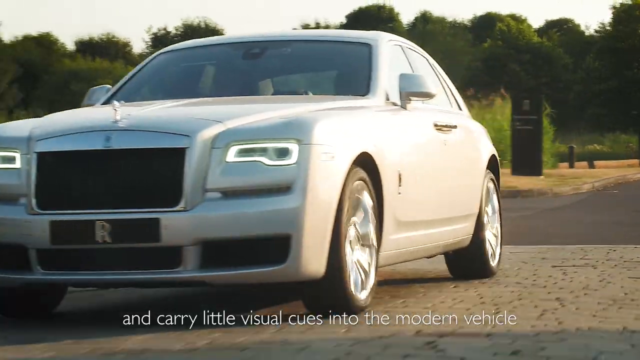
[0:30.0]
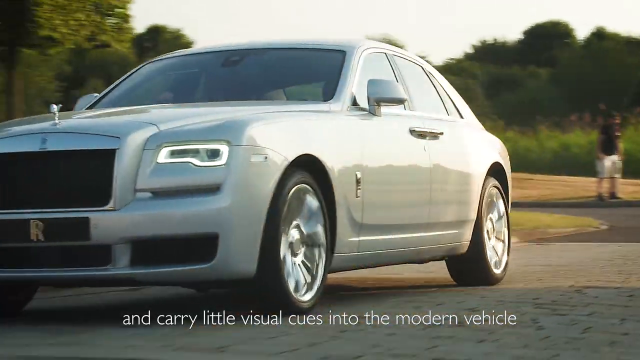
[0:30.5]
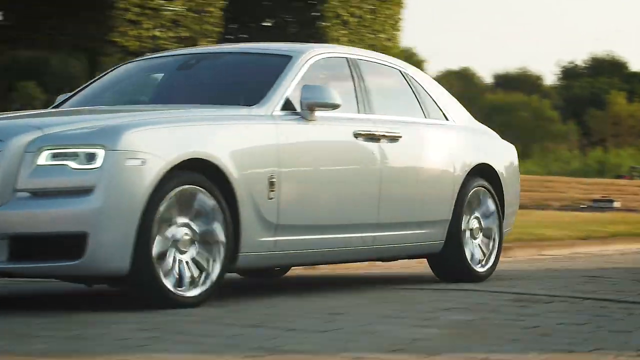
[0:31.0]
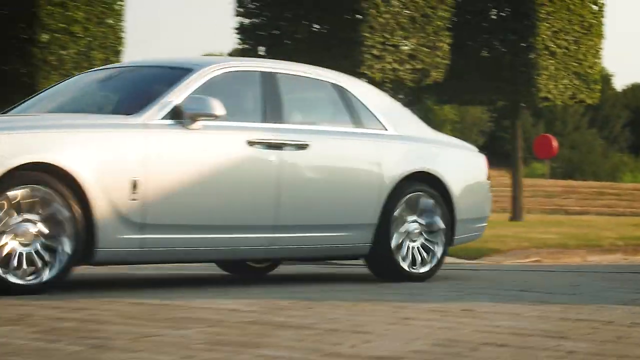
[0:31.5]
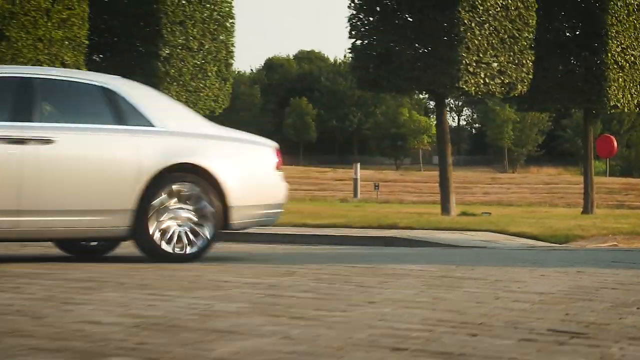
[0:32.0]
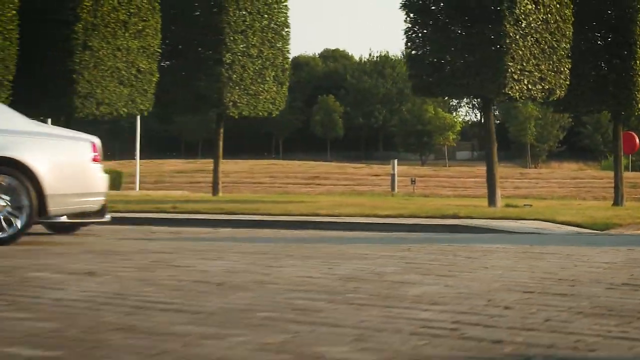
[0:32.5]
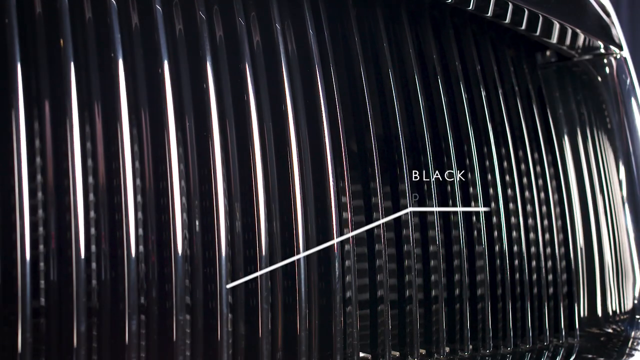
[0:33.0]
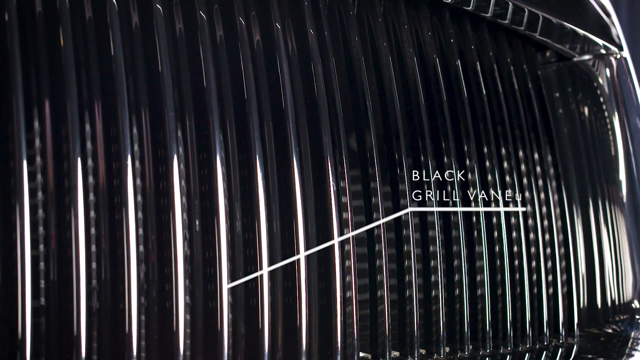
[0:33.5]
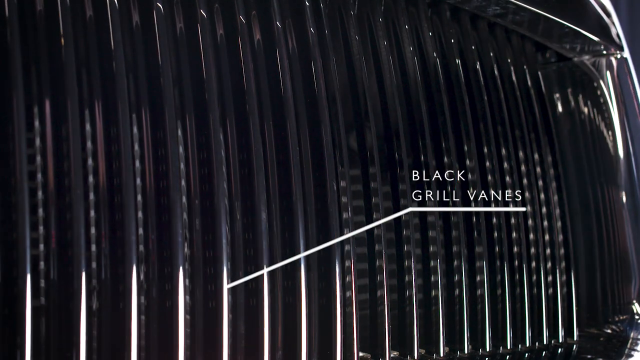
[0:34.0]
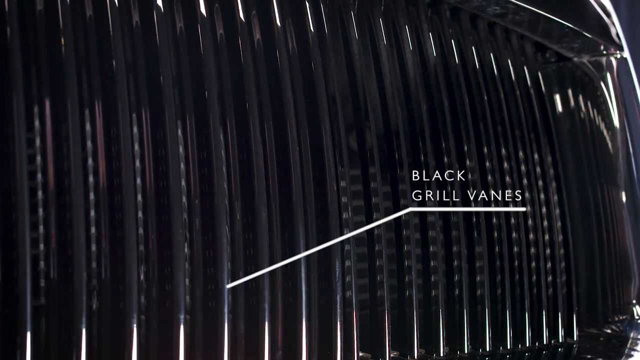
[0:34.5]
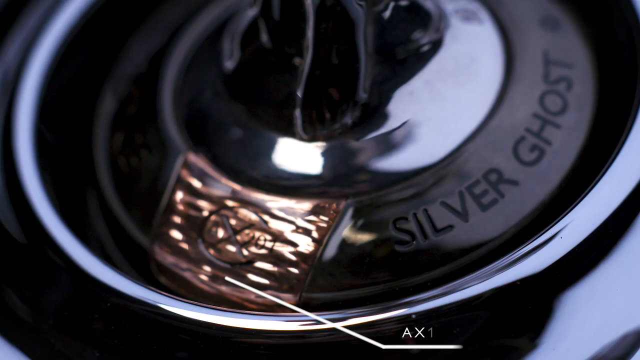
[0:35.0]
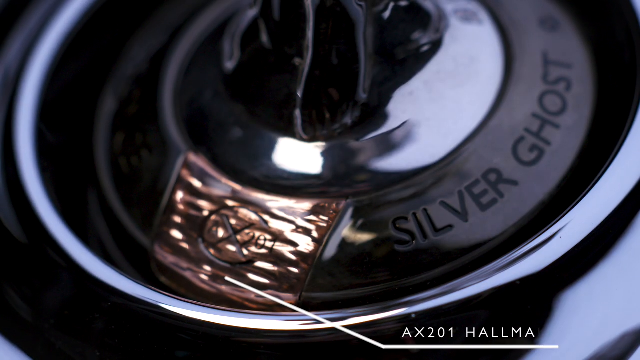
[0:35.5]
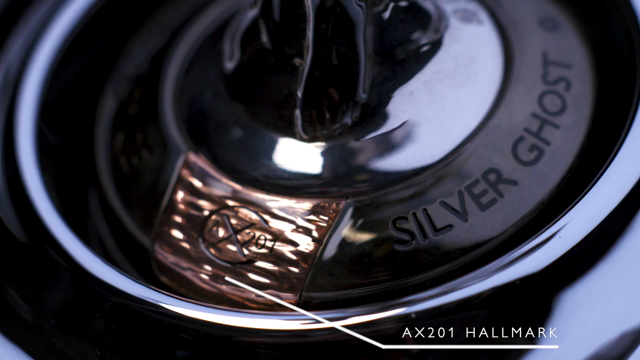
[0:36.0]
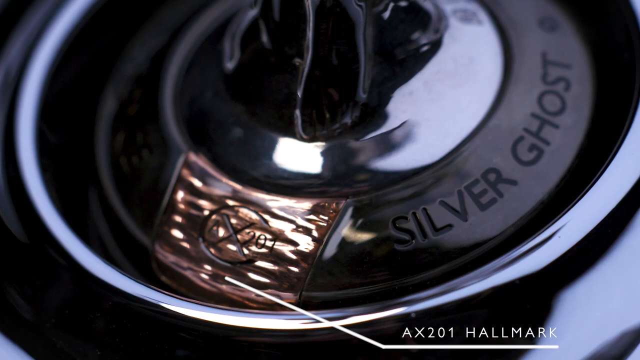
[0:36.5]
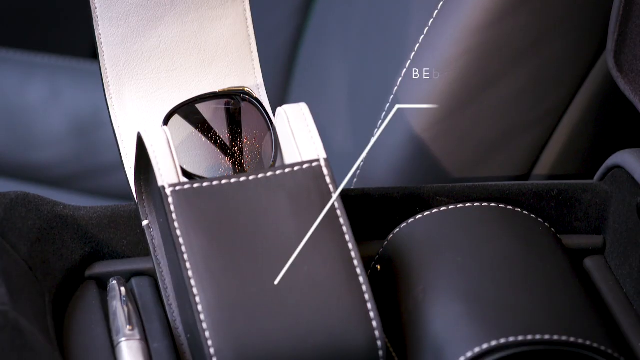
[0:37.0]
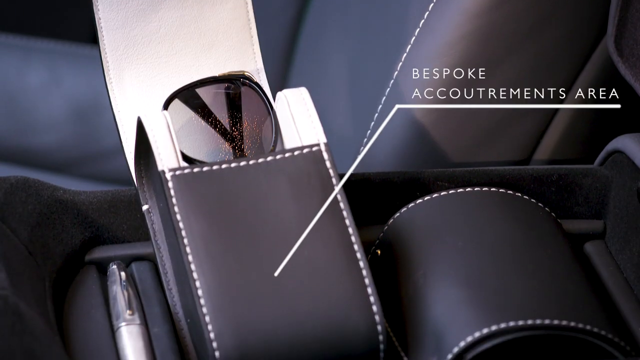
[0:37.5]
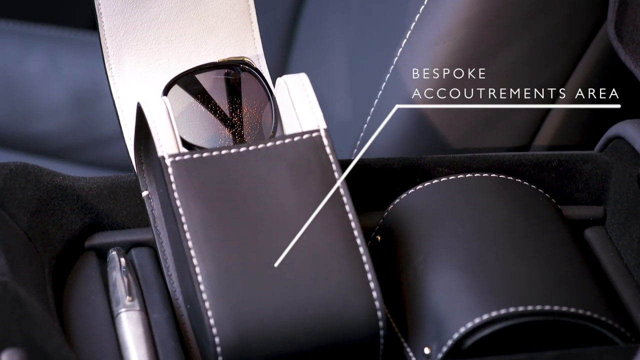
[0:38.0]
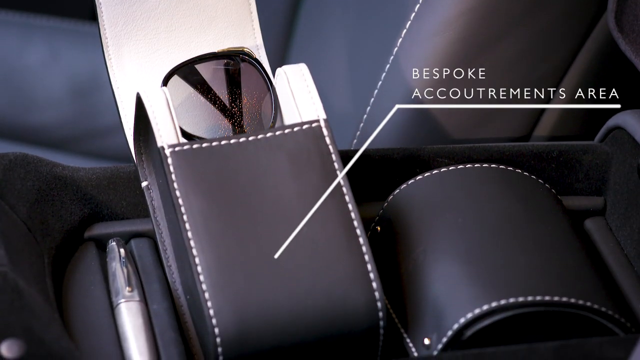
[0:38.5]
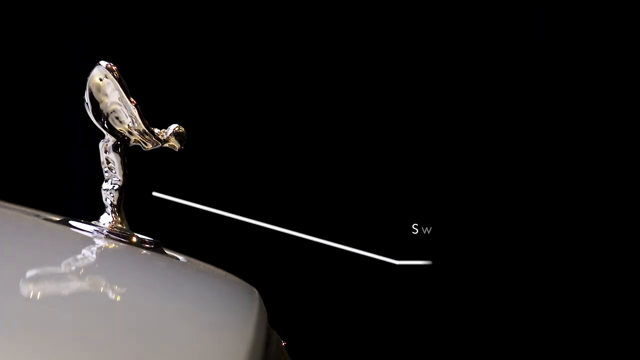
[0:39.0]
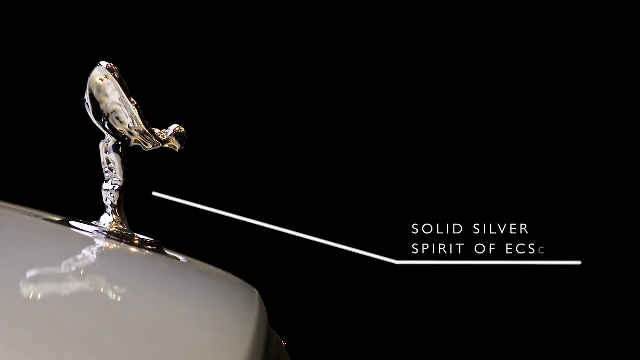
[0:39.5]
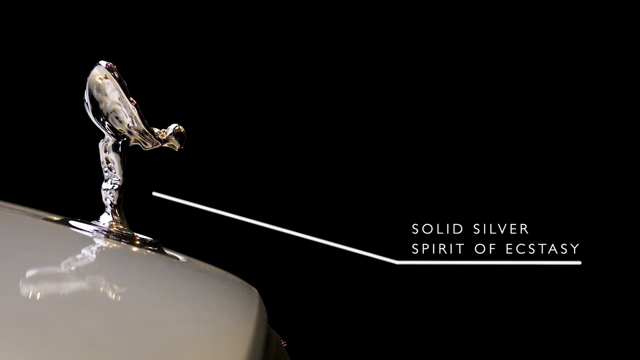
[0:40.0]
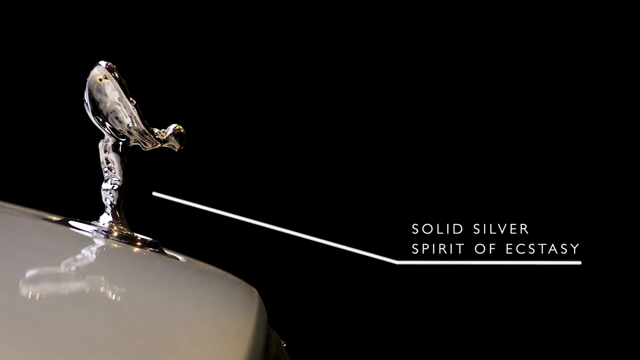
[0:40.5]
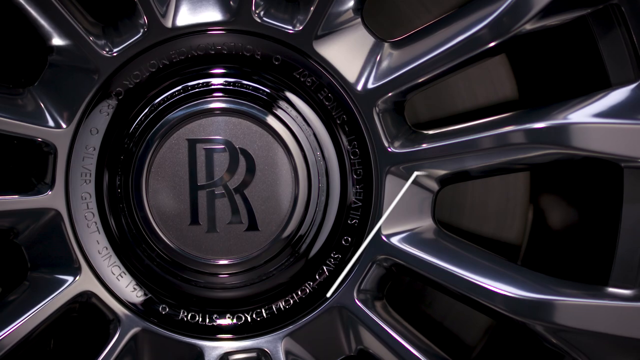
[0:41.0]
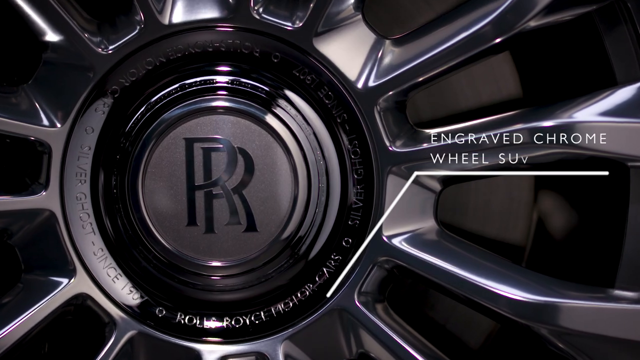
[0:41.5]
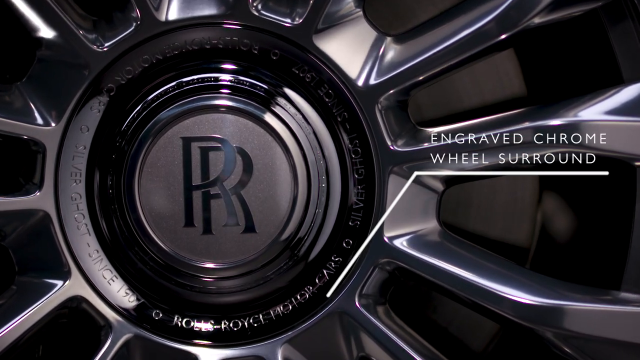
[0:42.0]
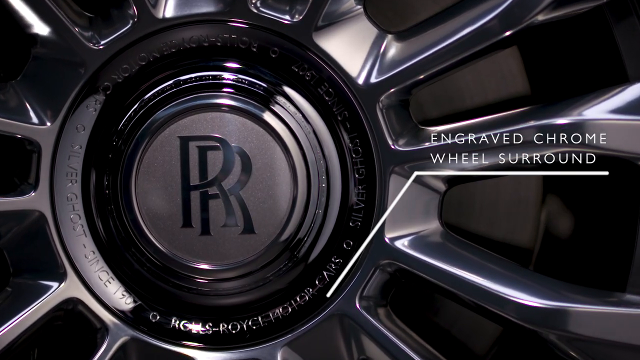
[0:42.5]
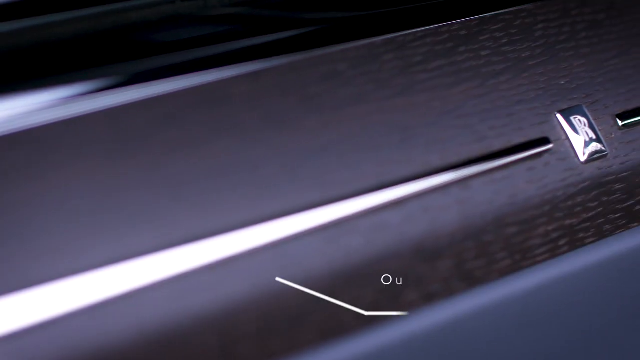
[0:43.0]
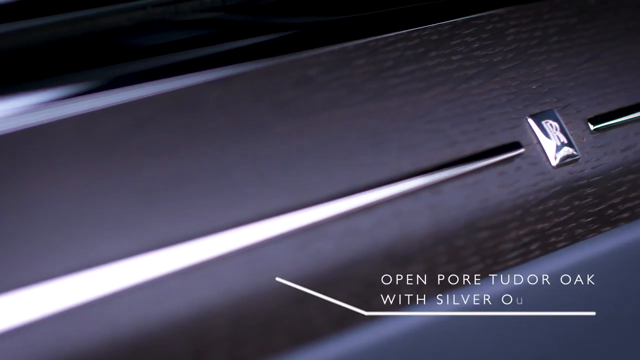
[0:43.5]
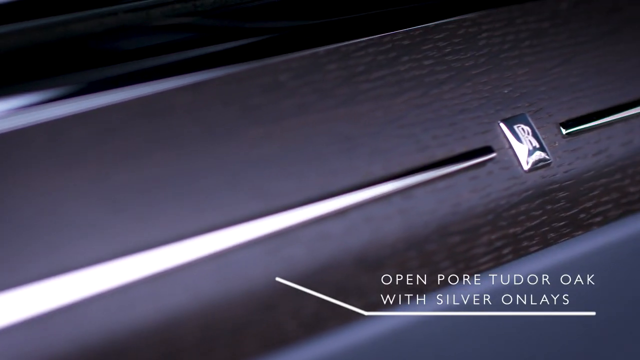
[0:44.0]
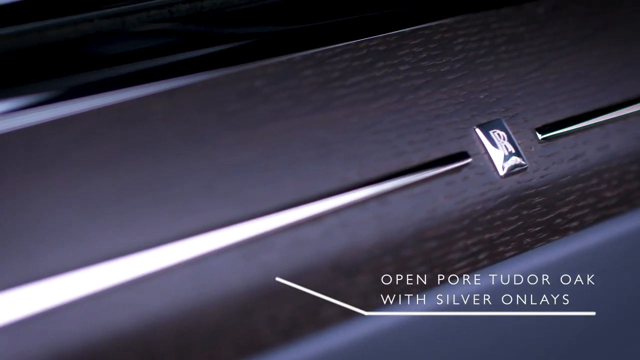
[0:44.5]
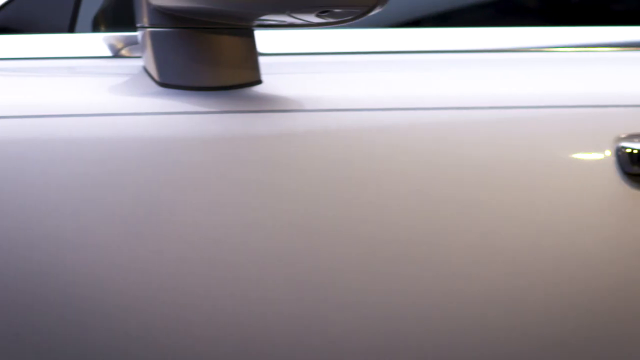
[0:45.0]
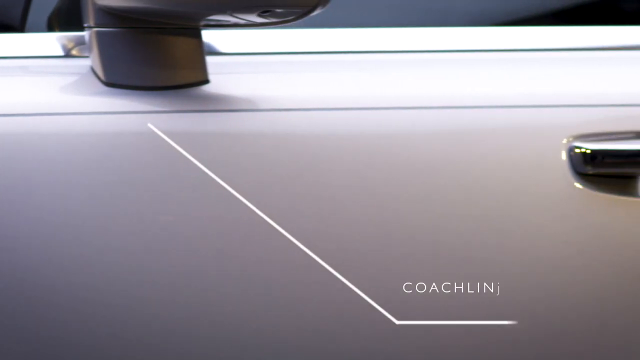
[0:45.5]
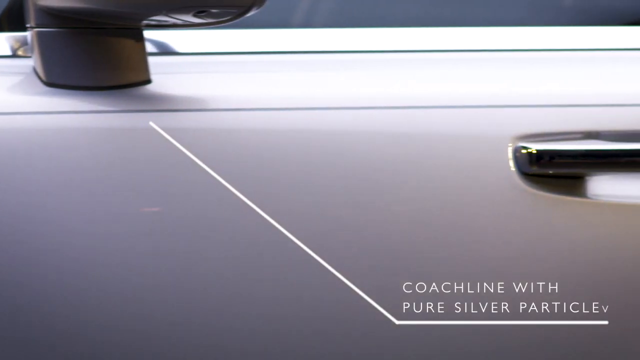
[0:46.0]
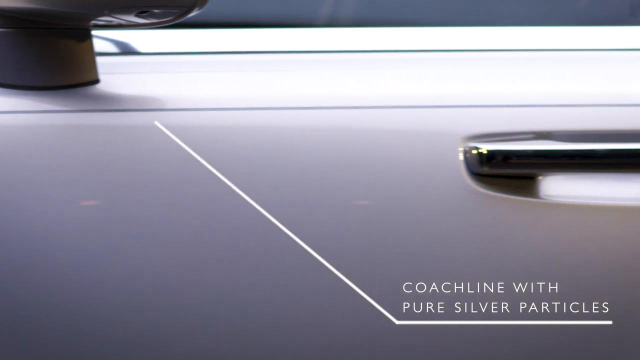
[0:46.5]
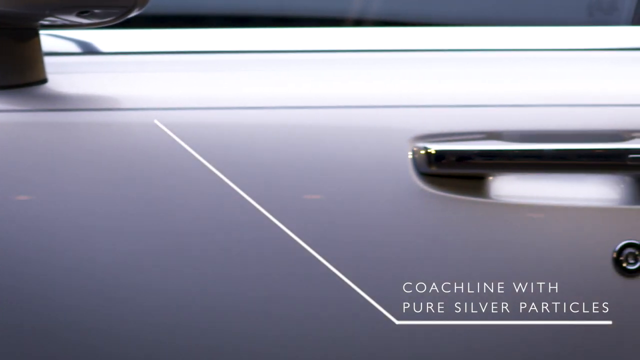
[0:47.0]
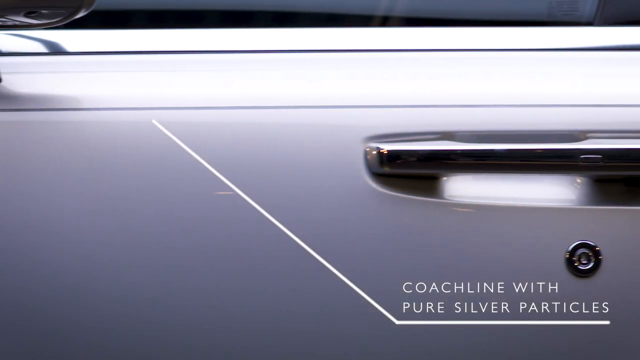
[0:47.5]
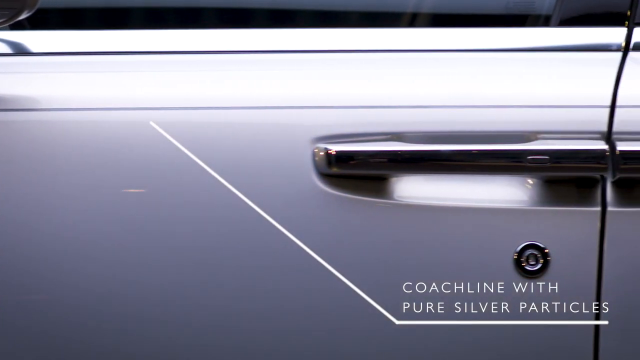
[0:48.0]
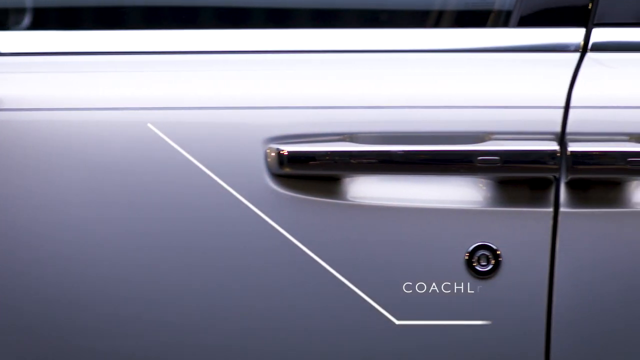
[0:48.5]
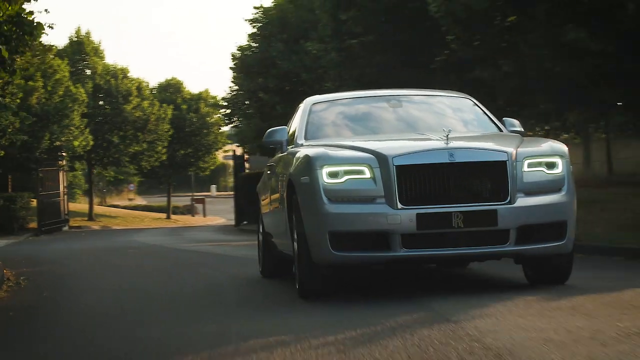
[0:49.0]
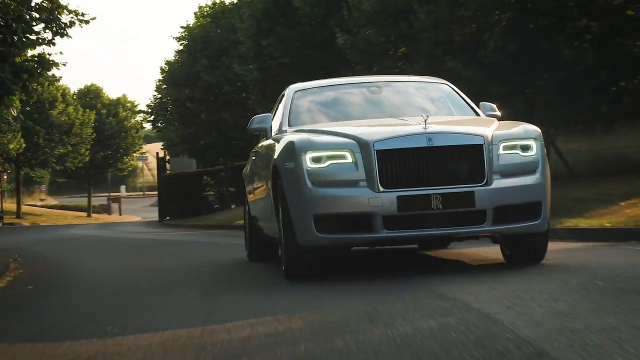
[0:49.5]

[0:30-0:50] A brand new, silver Rolls-Royce is shown. There is an up-close picture of a black grill and an up-close picture of the silver ghost, a round disc. Sunglasses in a case are shown. The medallion on the front of the hood appears with text beginning "solid silver." Up-close pictures show parts of the Rolls-Royce, including the RR. Text reads "open pore Tudor oak with silver onlays." The camera moves down the side of the car, which is very sleek and smooth. The car drives on the driveway again. It looks like it is by a park, because there is a brown sign that stands up vertically on the side of the road.